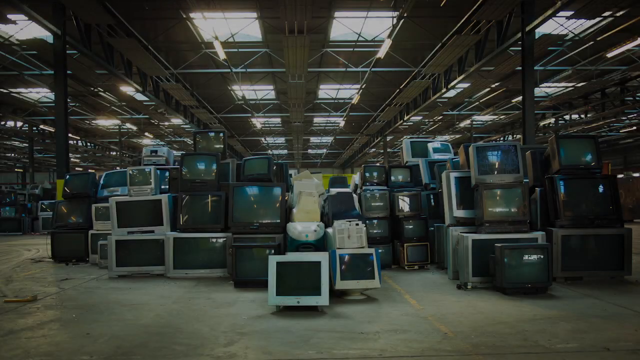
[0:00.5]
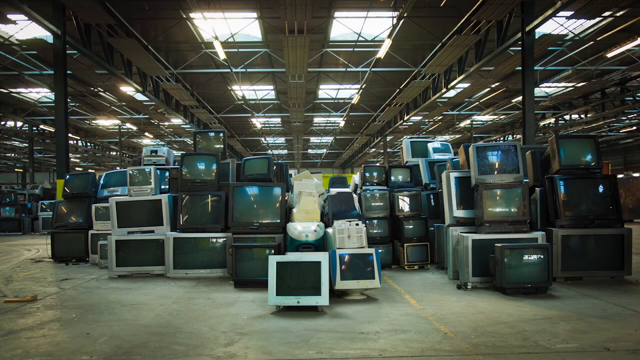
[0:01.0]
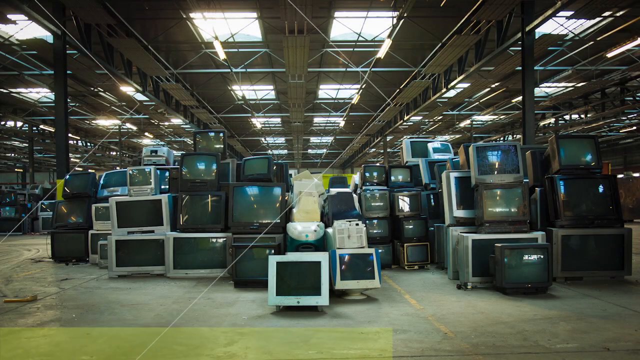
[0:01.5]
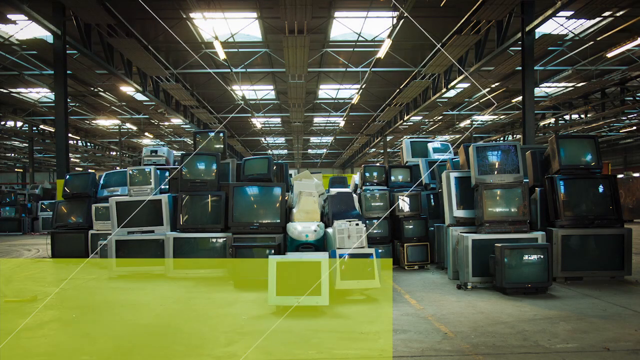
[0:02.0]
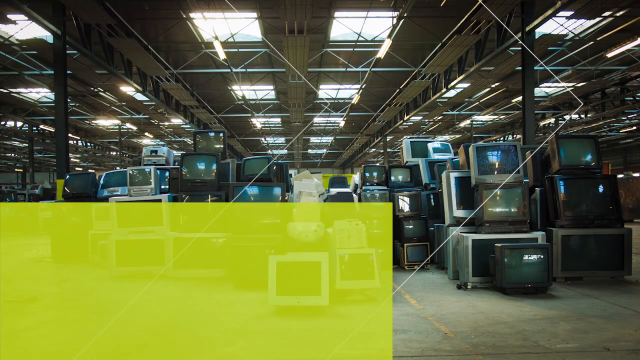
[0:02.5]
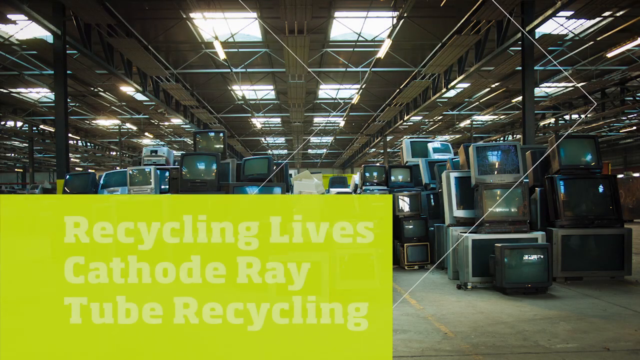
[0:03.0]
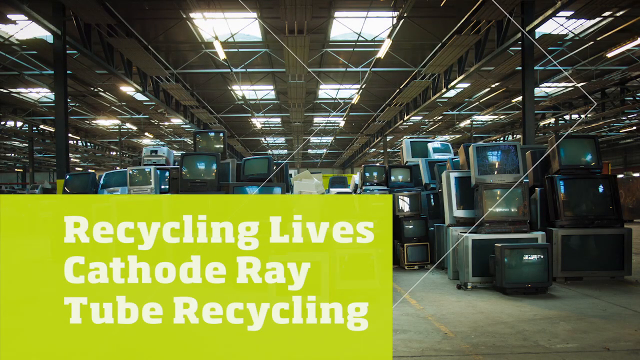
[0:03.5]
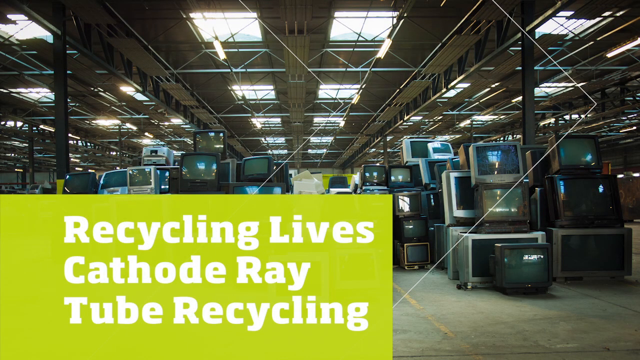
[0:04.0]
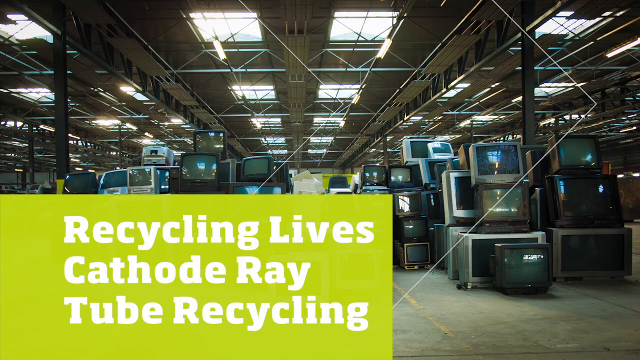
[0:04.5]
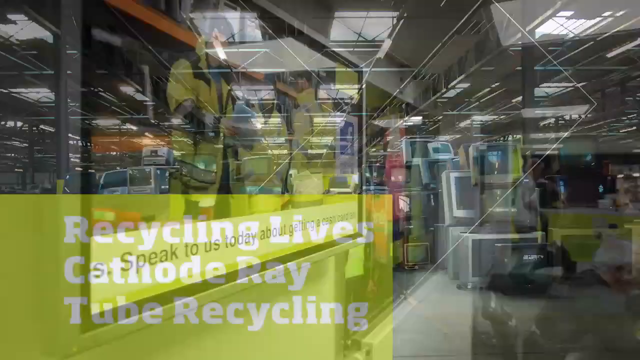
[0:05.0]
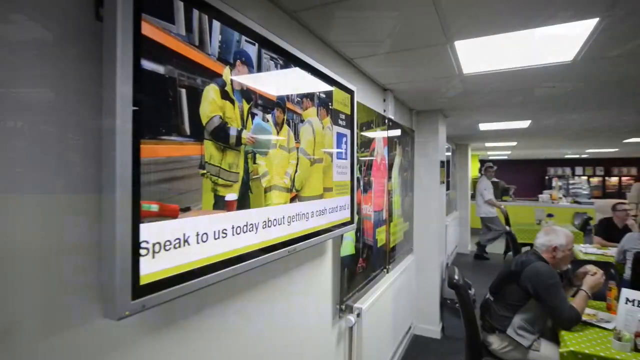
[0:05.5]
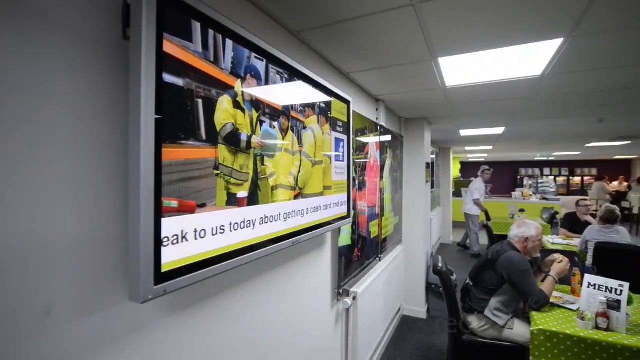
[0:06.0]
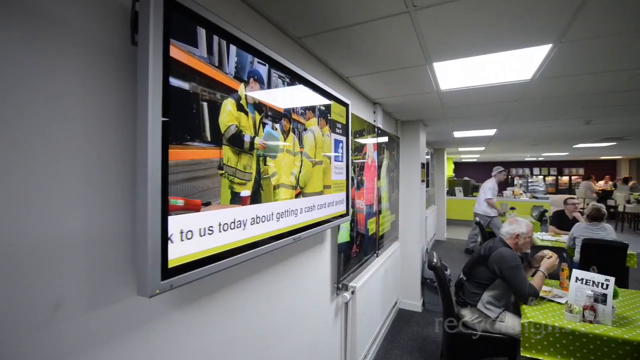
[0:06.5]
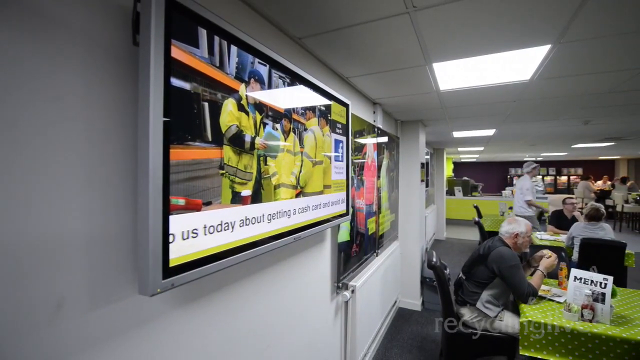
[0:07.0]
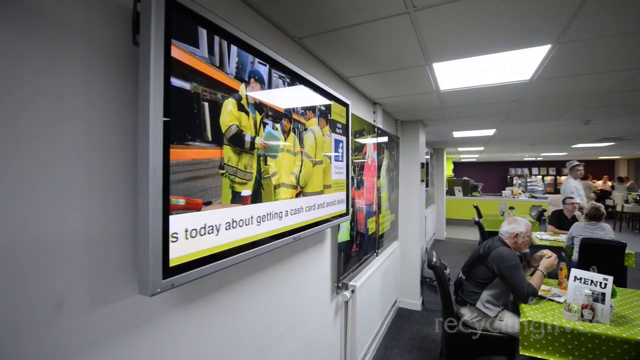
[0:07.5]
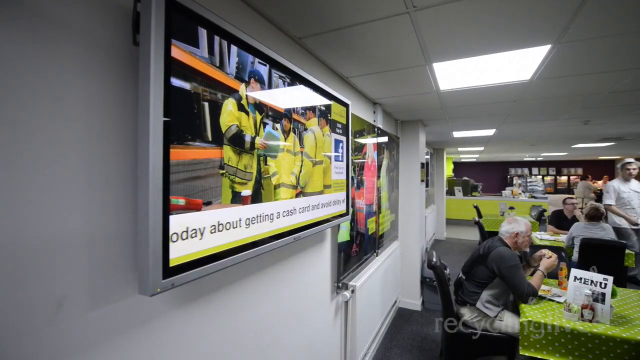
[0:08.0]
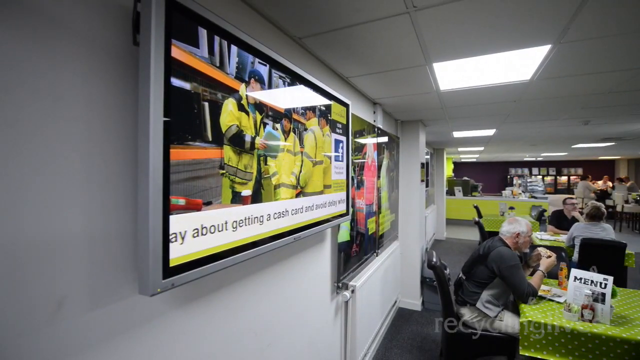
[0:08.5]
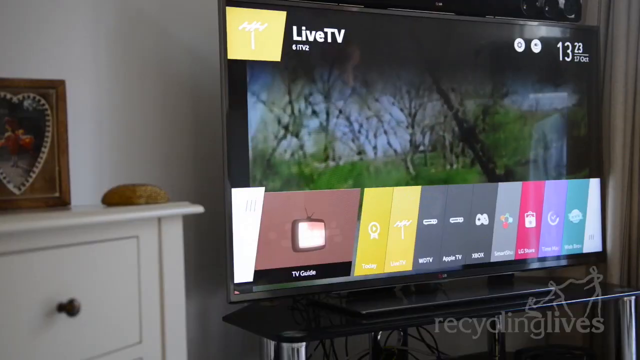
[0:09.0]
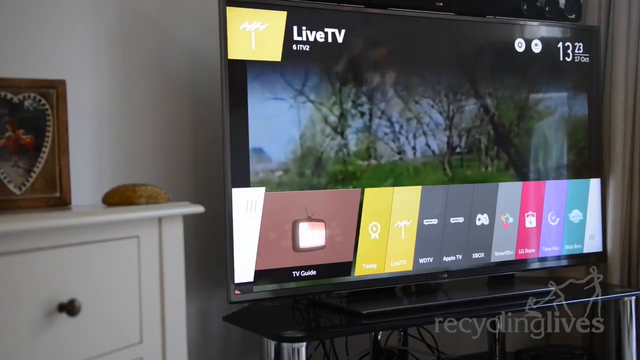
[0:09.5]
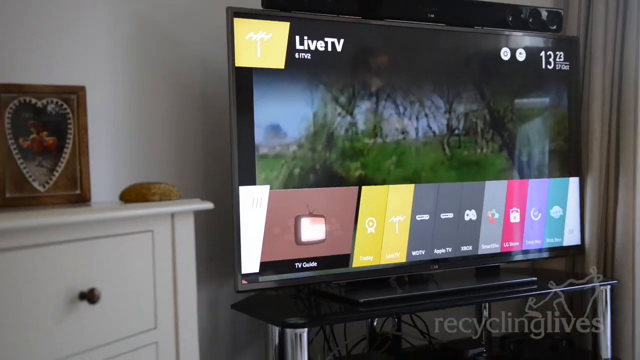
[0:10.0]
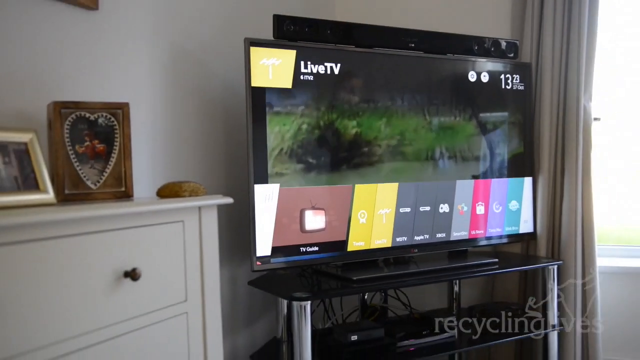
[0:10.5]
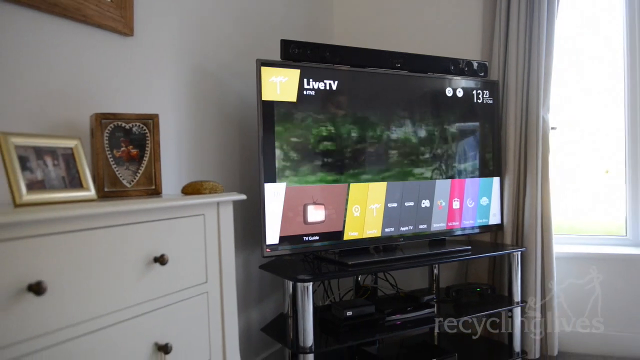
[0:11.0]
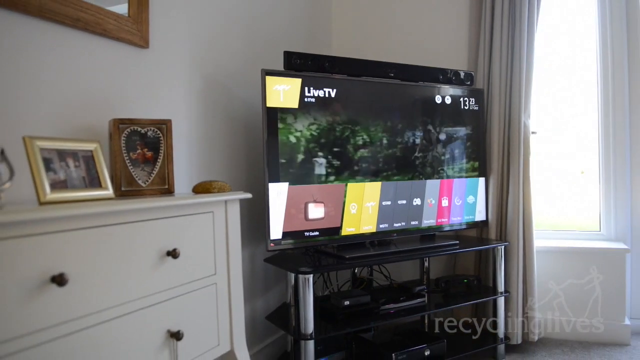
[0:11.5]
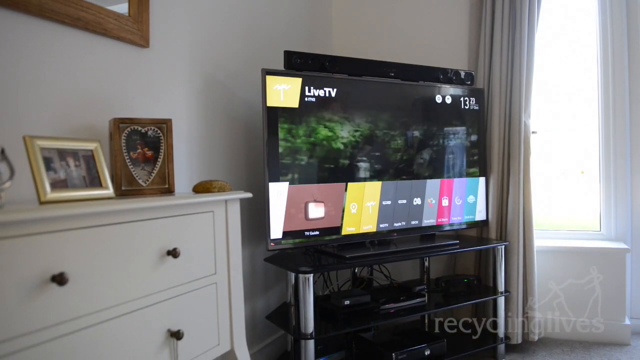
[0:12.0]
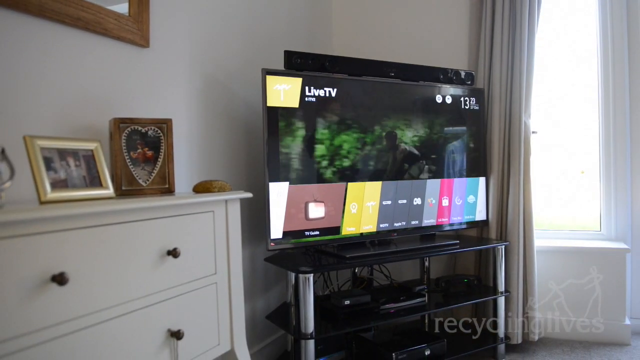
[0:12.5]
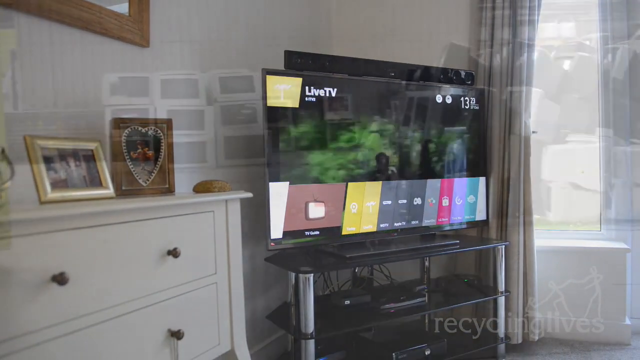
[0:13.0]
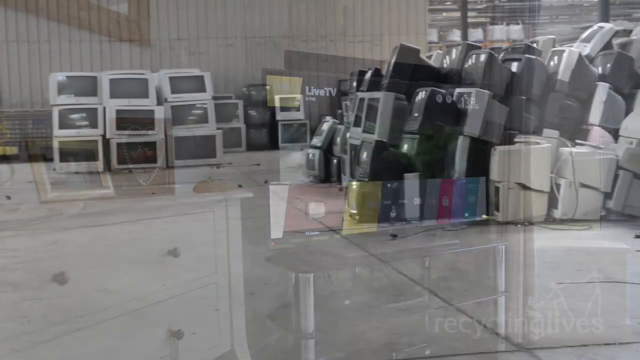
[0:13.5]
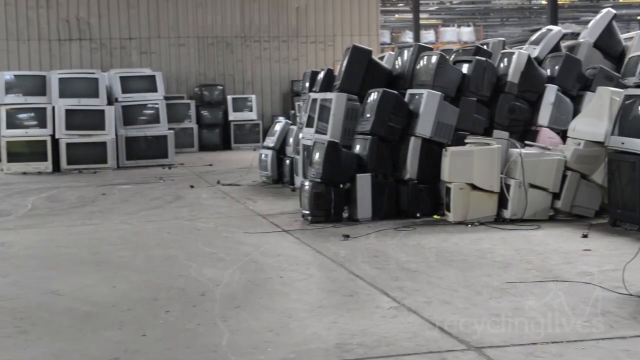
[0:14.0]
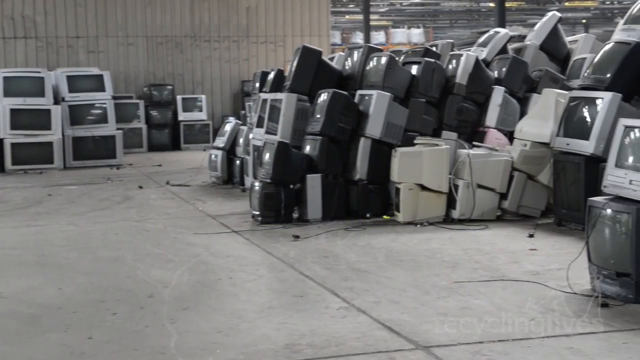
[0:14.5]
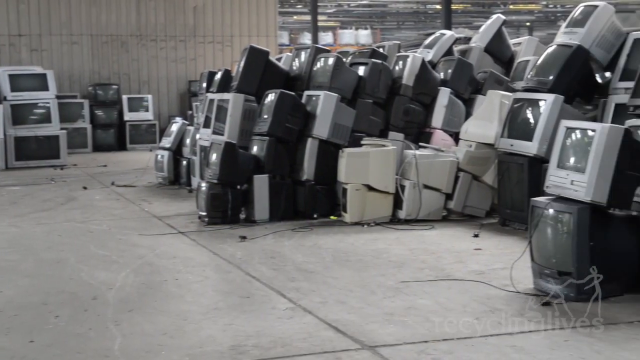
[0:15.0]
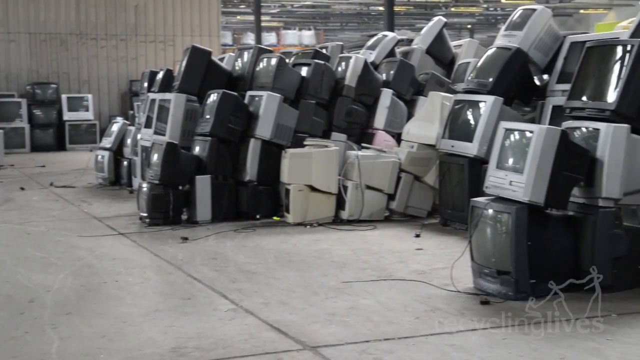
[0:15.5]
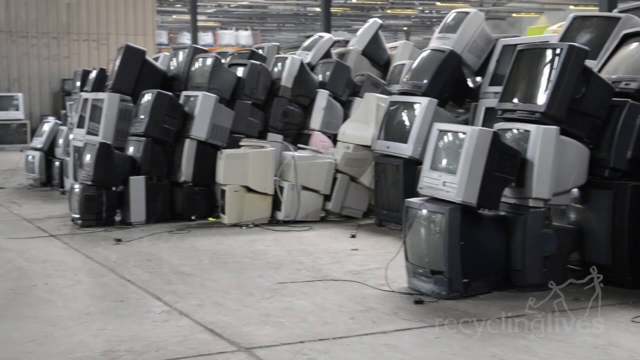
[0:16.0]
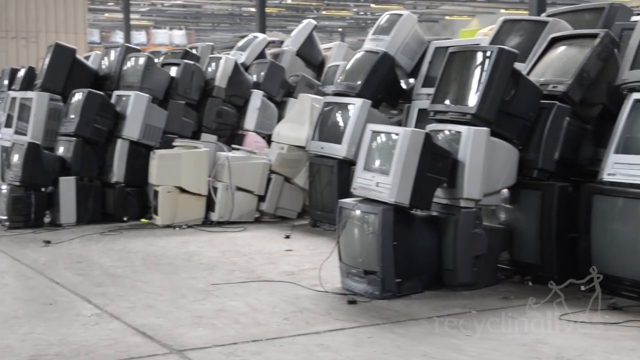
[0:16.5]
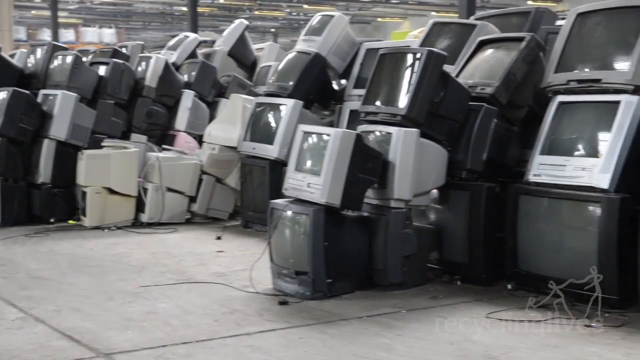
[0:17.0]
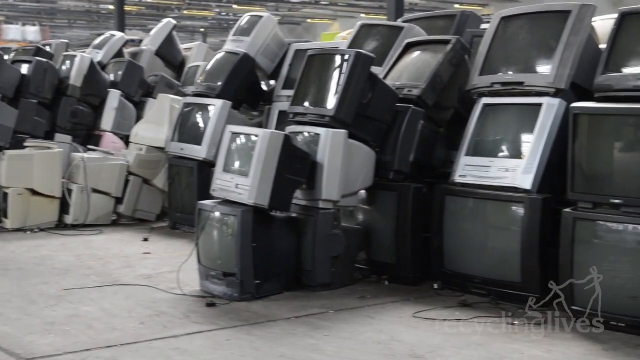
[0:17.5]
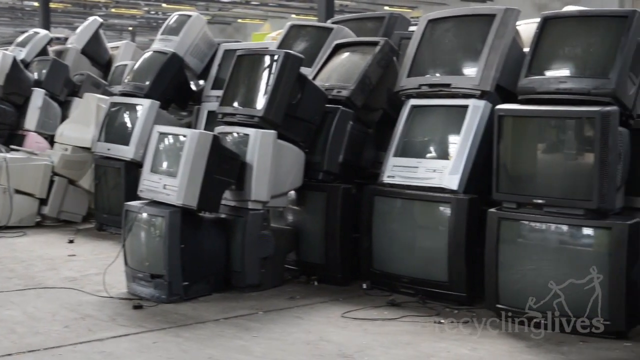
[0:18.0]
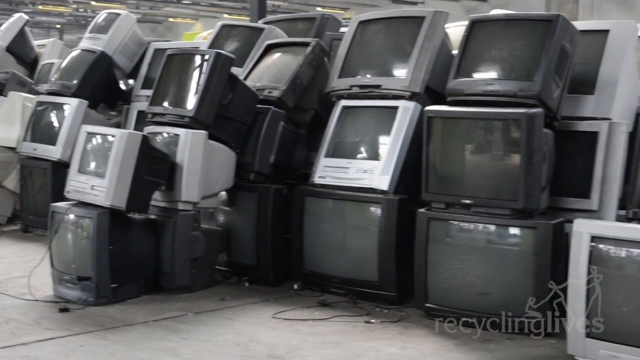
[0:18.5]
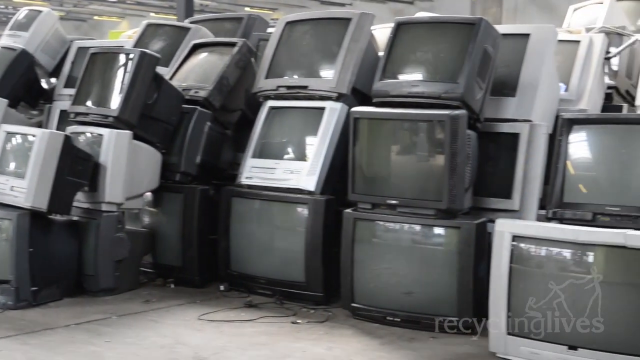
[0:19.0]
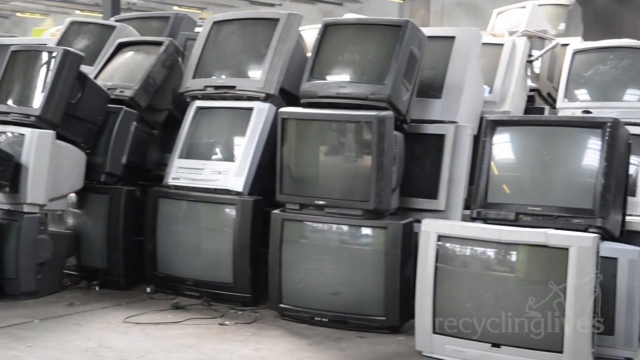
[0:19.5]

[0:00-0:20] A photograph shows a lot of television sets piled inside a warehouse, with white text on a yellow rectangle reading "Recycling Lives cathode ray tube recycling". Next, people appear to be in some kind of room, maybe a cafeteria, with tables covered in yellow tablecloths. A flat screen TV on the wall on the left appears to be showing a news story, with men on screen wearing yellow and tan safety outfits. In the back, people order at a counter and walk around. The TV is shown again, and the shot slowly pans out. The TV appears to be in somebody's bedroom: a white dresser with picture frames on it is to the left, white curtains and a window are on the right, and the TV sits on a TV stand. The camera then pans across television sets piled and stacked on the floor of a warehouse in a black-and-white image. They are old, big, bulky television monitors, and some look like computer monitors. The ceiling is brown with a lot of metal rafters, and square white lights overhead are shining. The TV screens are all off but reflect the lights.